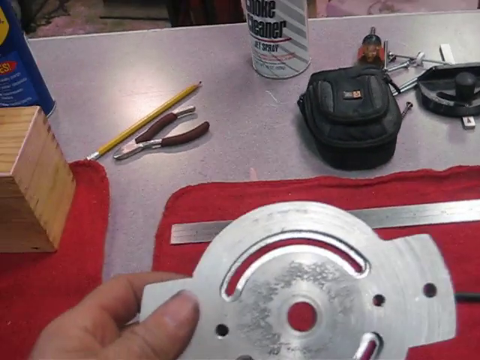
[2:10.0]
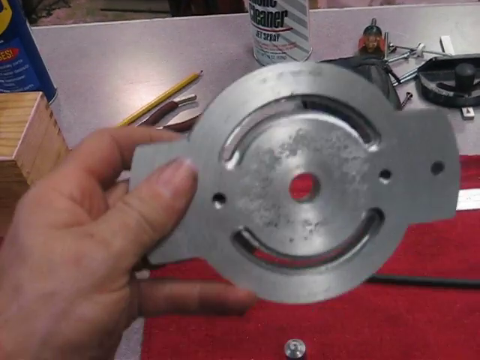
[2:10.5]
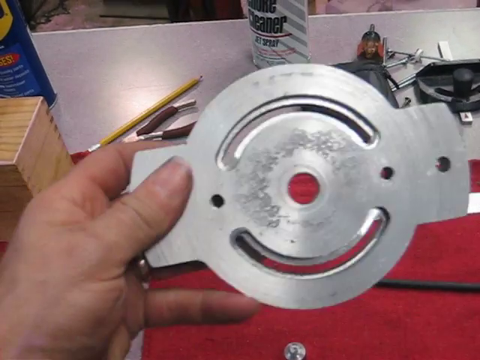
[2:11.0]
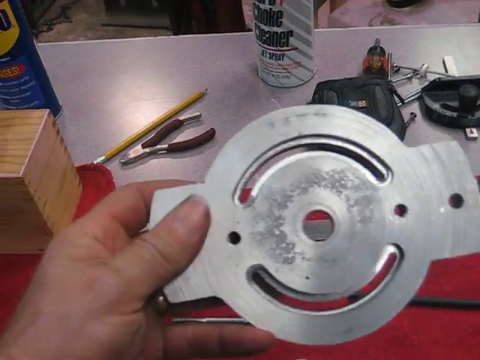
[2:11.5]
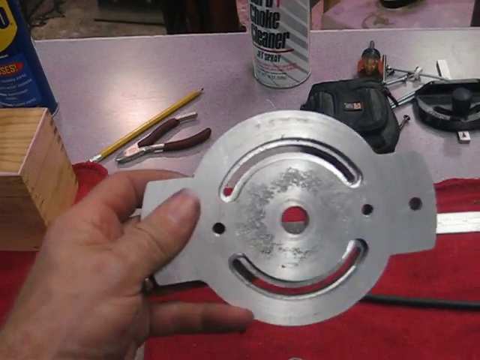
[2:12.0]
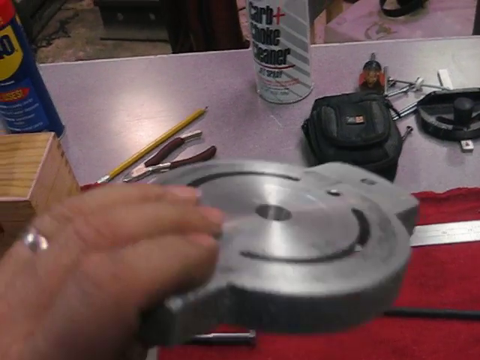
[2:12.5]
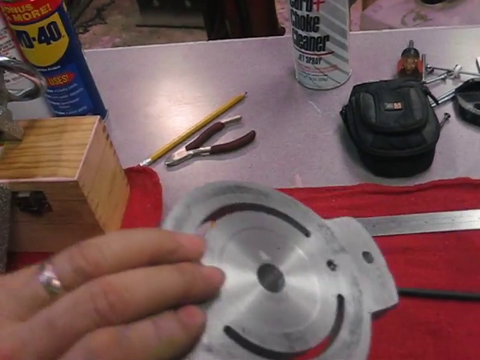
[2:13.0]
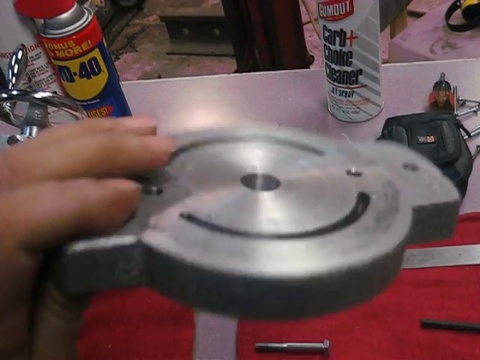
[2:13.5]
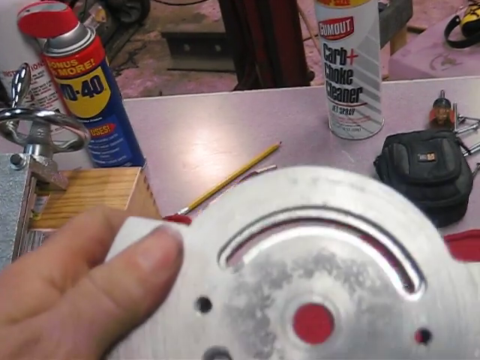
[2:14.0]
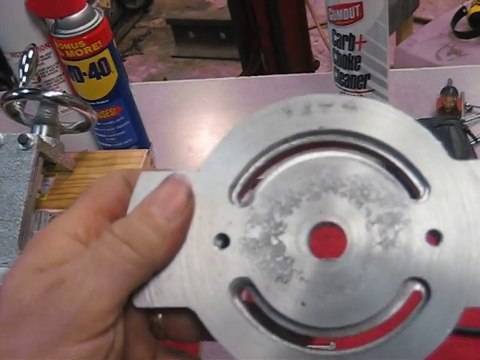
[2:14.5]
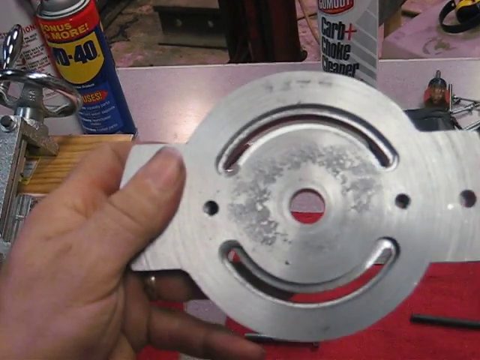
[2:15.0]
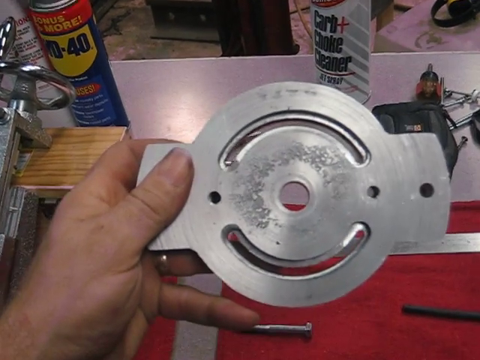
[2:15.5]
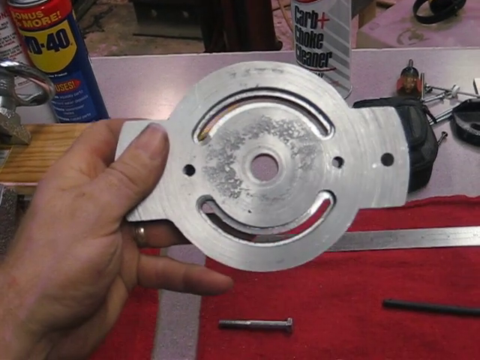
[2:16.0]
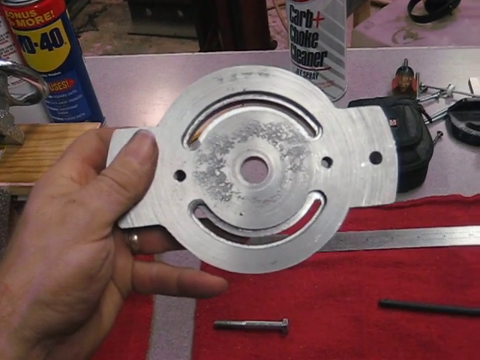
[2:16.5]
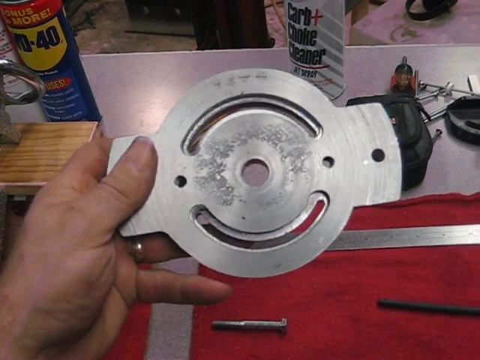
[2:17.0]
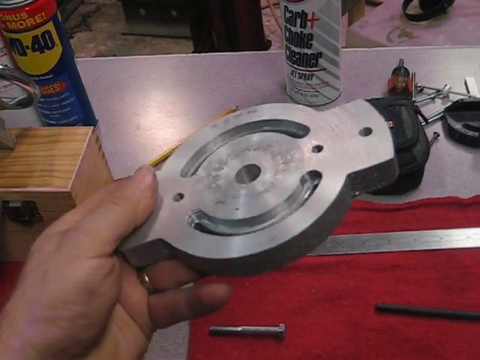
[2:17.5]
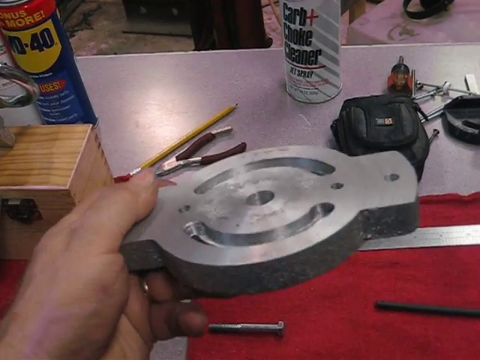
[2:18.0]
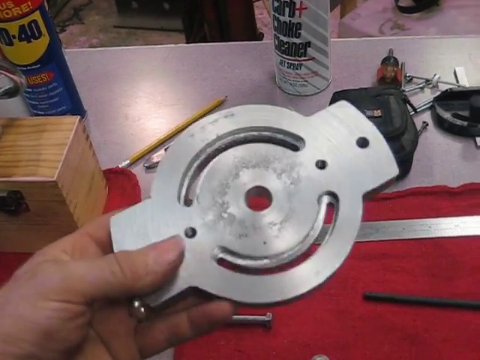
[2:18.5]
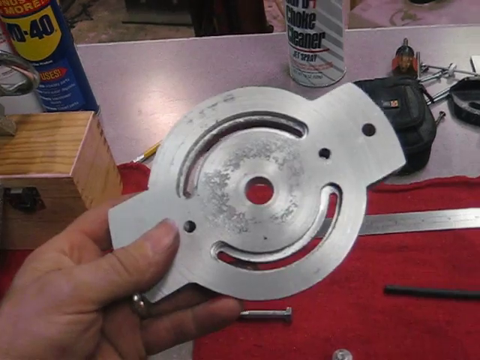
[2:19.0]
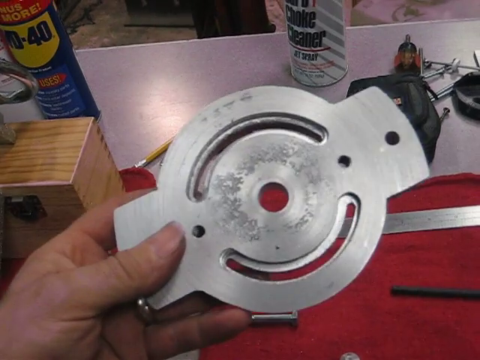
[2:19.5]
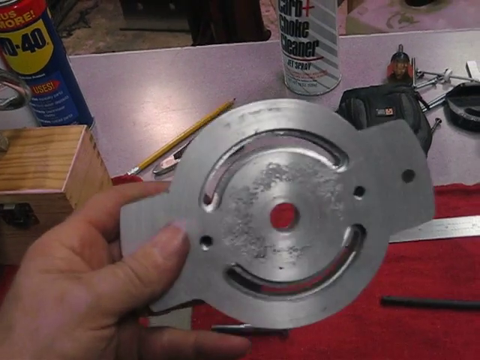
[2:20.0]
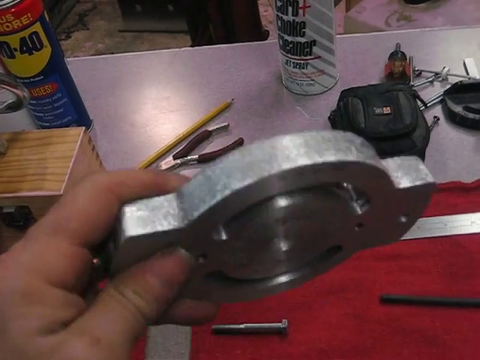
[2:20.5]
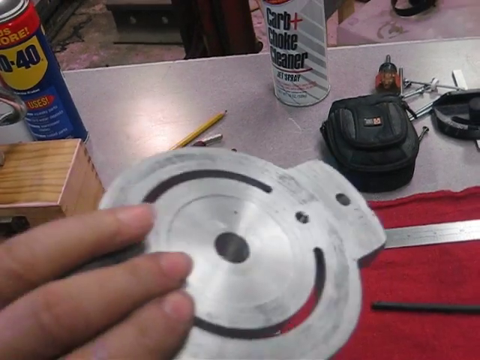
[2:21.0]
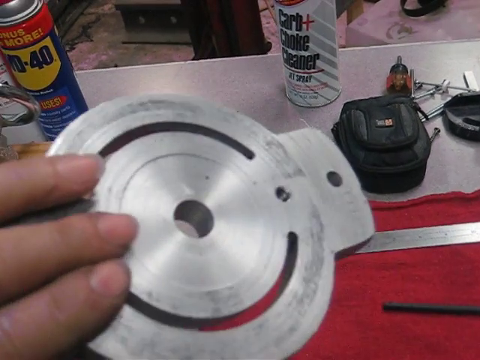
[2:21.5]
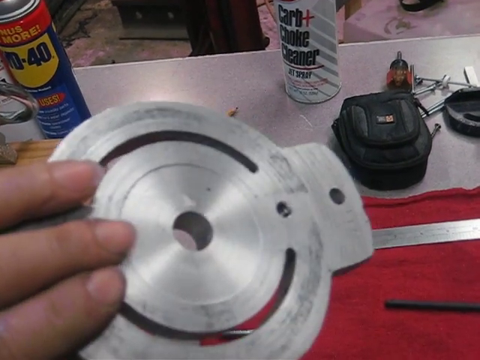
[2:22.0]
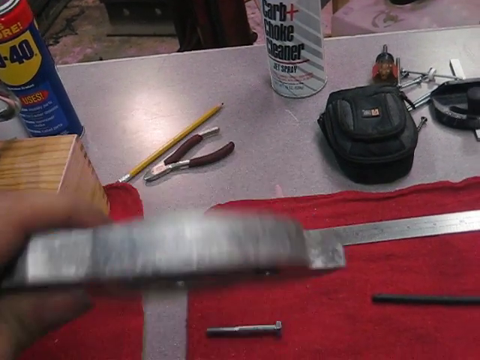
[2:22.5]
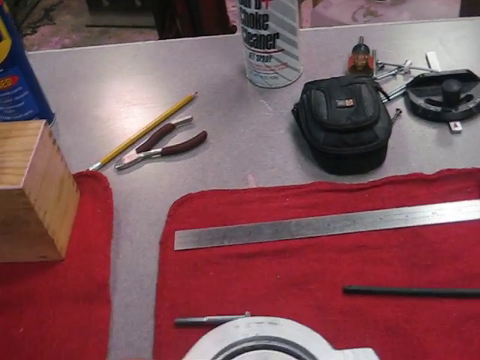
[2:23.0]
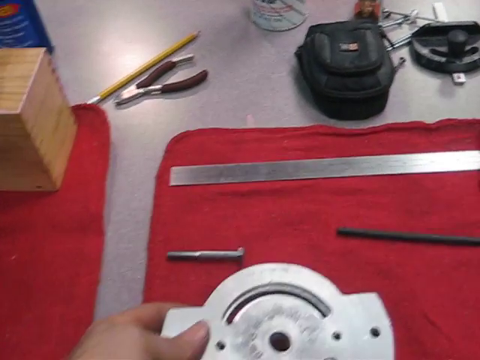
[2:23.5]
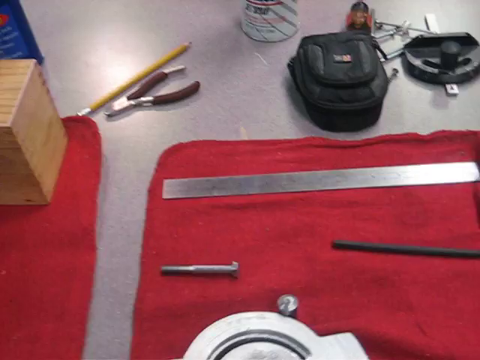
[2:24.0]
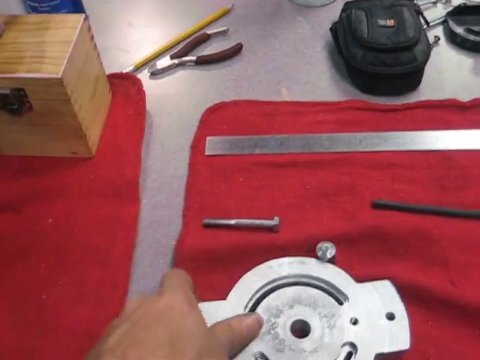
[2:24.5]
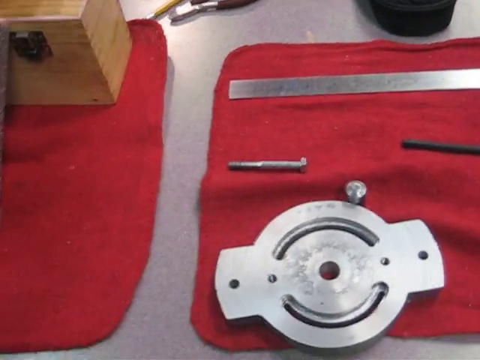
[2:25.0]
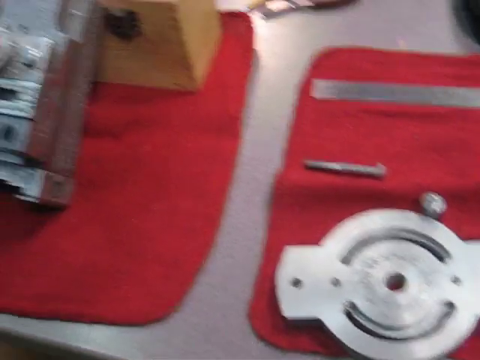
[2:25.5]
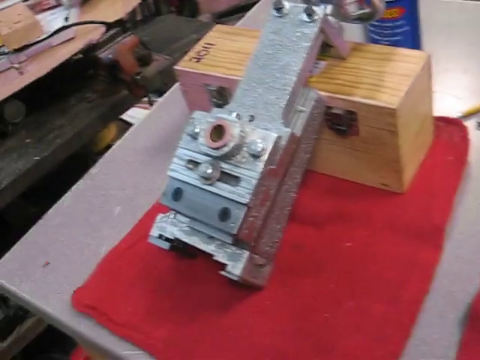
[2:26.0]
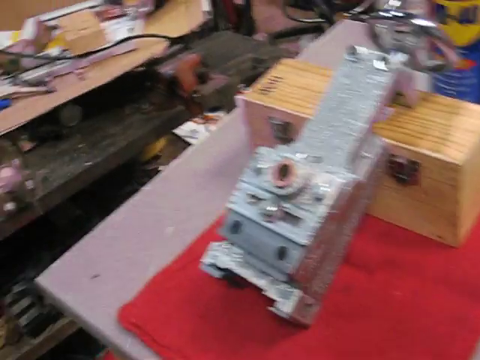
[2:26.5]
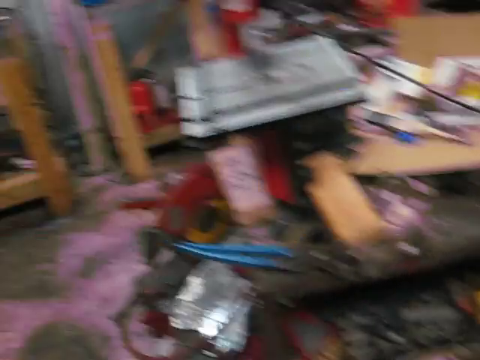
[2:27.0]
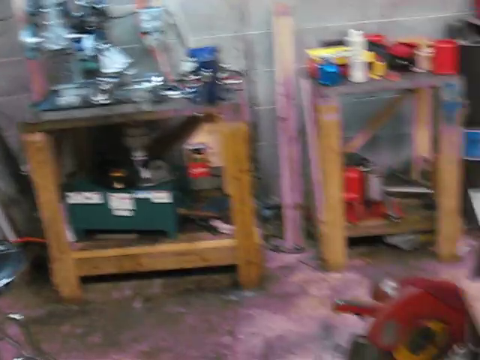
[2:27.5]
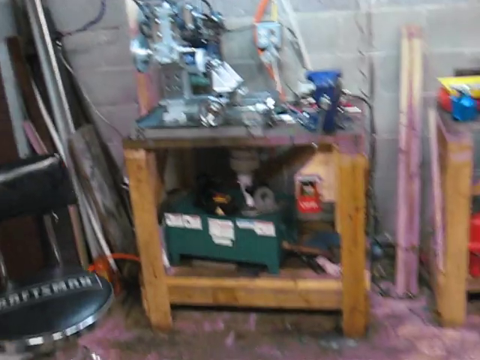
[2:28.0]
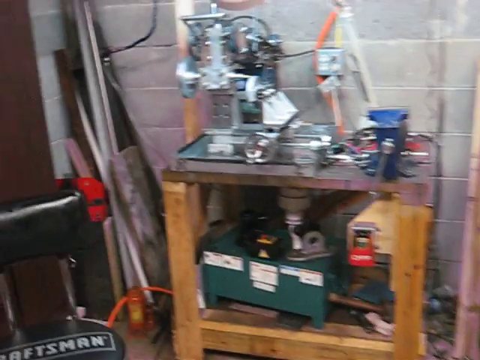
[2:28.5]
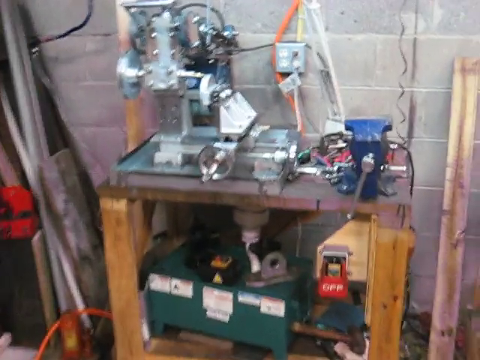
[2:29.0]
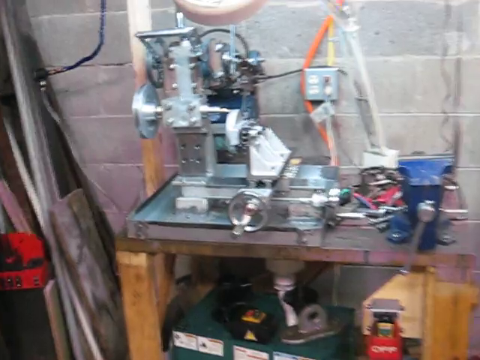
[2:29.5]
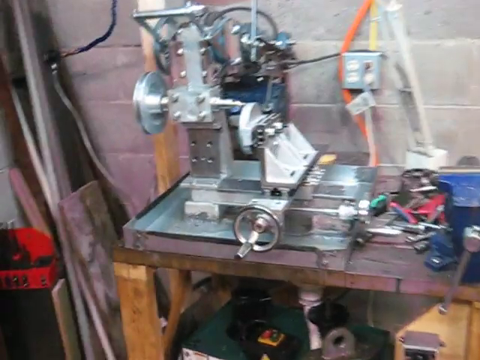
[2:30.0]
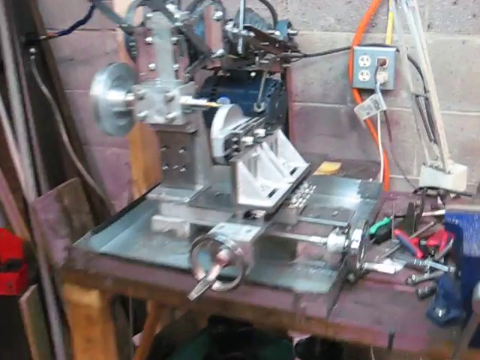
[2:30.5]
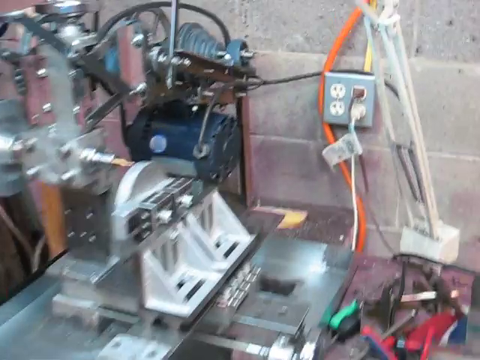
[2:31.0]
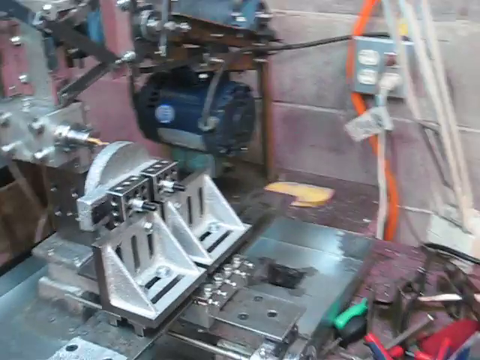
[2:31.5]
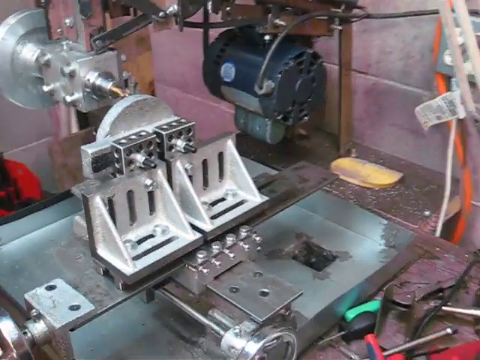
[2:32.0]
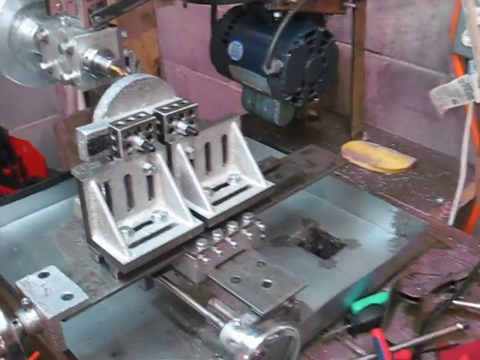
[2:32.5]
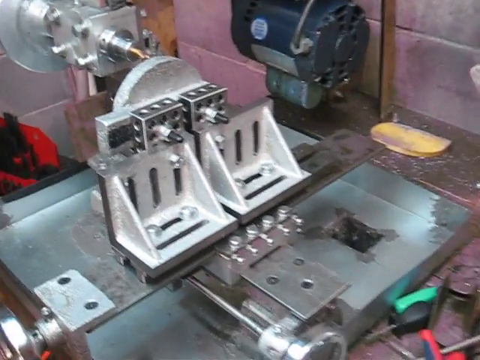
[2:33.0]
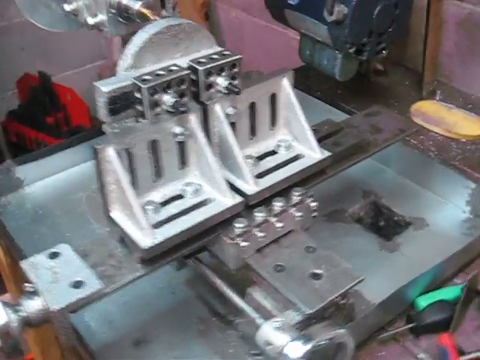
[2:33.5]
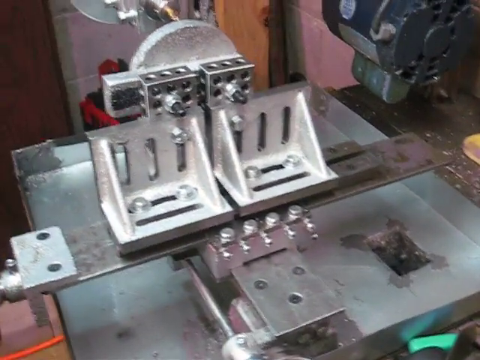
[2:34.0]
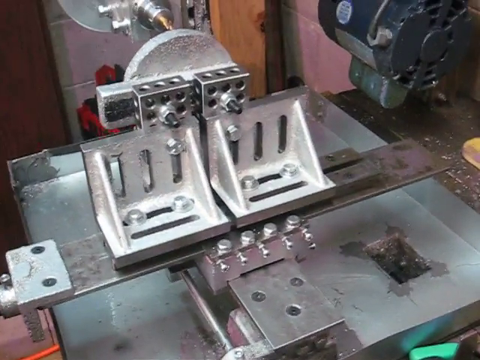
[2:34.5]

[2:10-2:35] A person holds a disc in their left hand. The disc is round, with two flat parts that kind of look like handles, a hole right in the middle, two smaller holes on each side, and slits on the top and bottom. The person twirls the disc around and shows its other side. It is a fairly thick disc, probably an inch or two thick. He places it back on a red mat, which also has some bolts on it and a silver tool shaped kind of like a ruler. The camera pans to the back, showing that the person is inside some sort of machine shop. It then shows what looks like a drilling machine, moving closer to a close-up of it, with a clamp next to it.